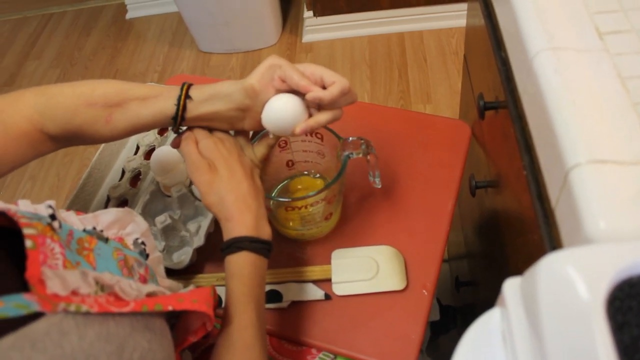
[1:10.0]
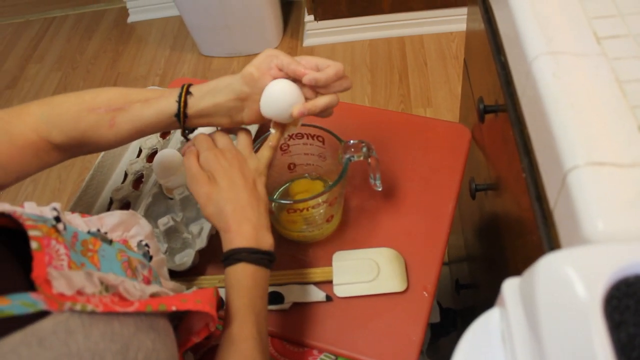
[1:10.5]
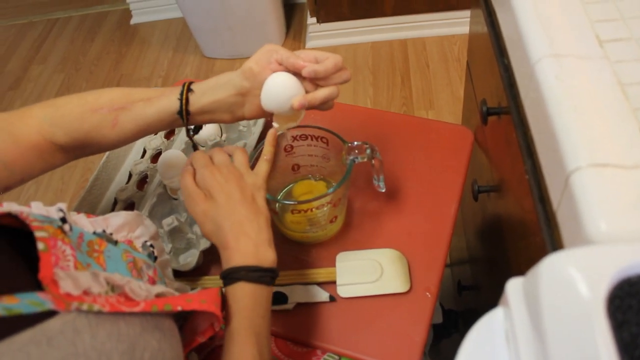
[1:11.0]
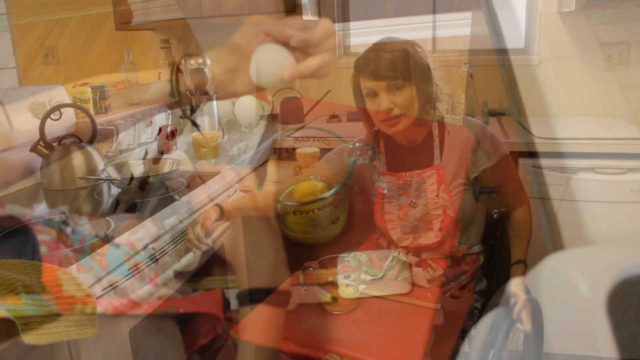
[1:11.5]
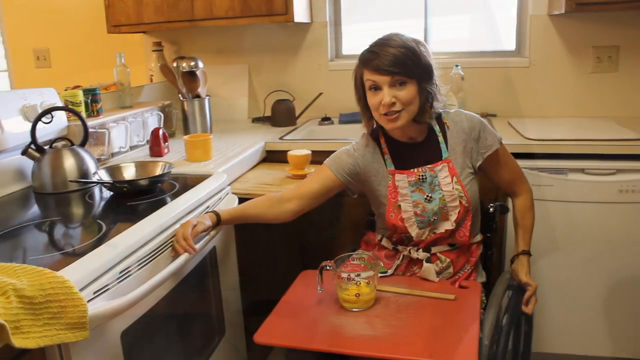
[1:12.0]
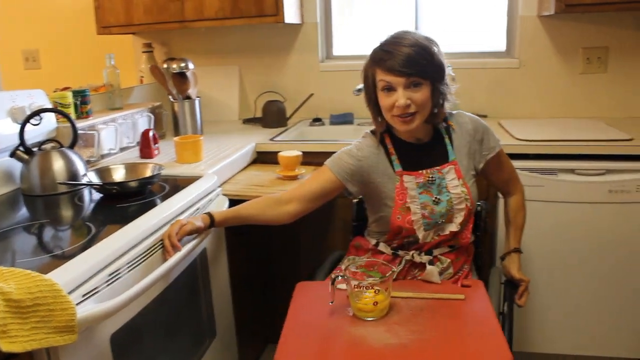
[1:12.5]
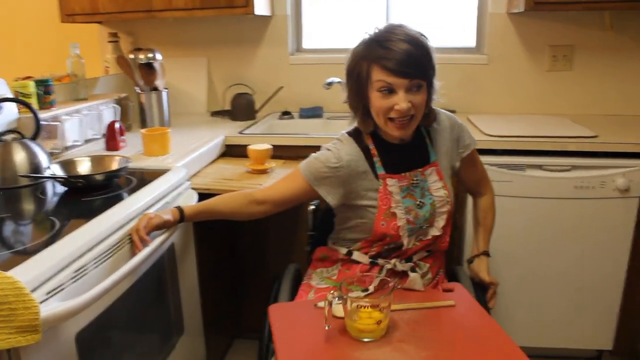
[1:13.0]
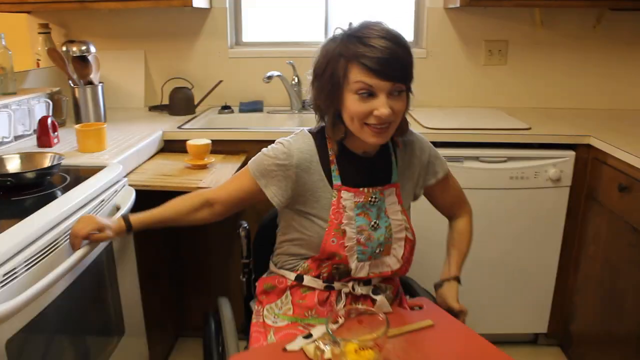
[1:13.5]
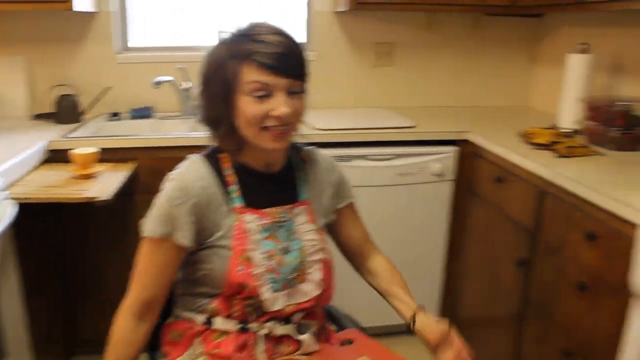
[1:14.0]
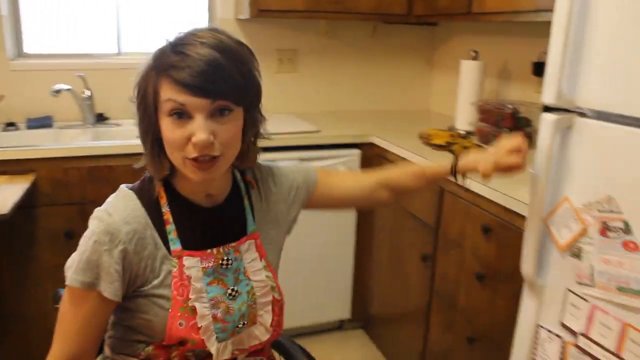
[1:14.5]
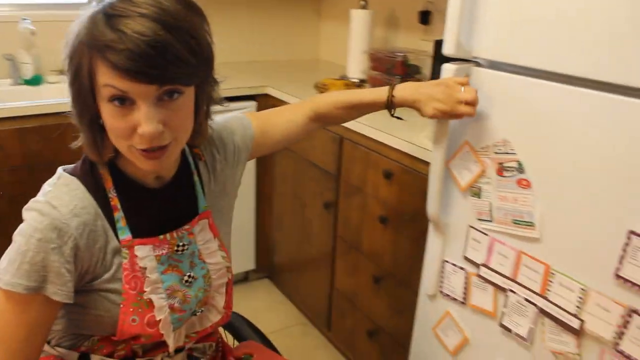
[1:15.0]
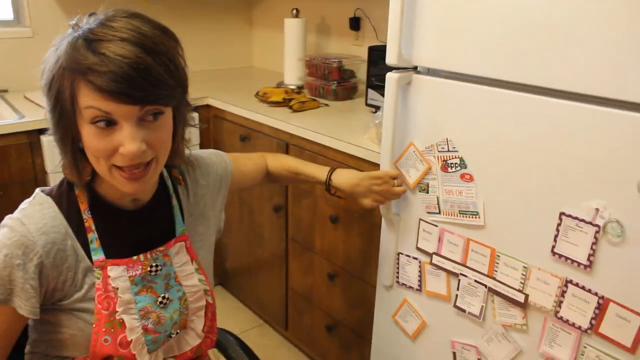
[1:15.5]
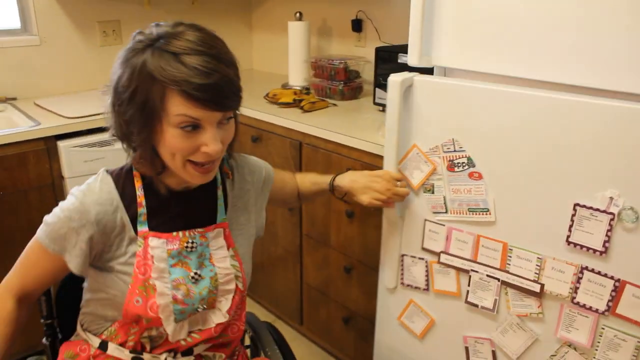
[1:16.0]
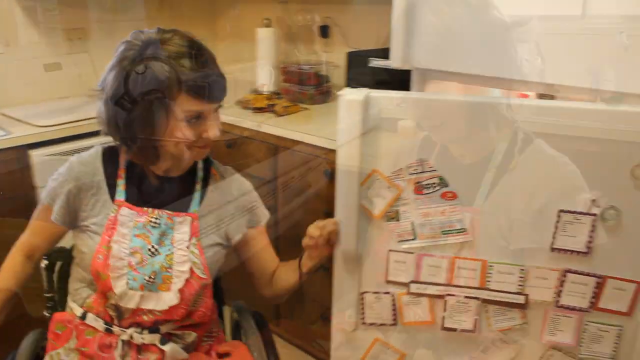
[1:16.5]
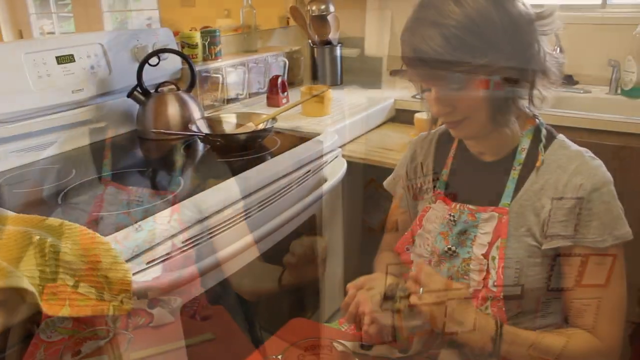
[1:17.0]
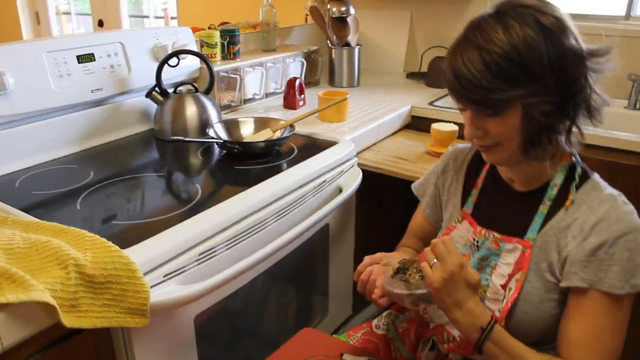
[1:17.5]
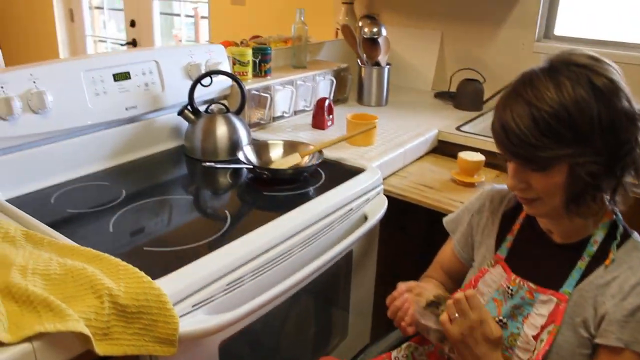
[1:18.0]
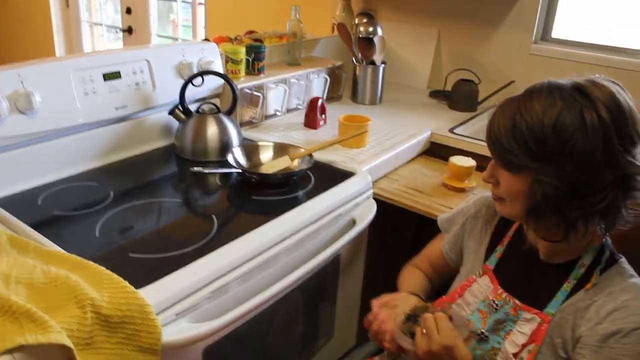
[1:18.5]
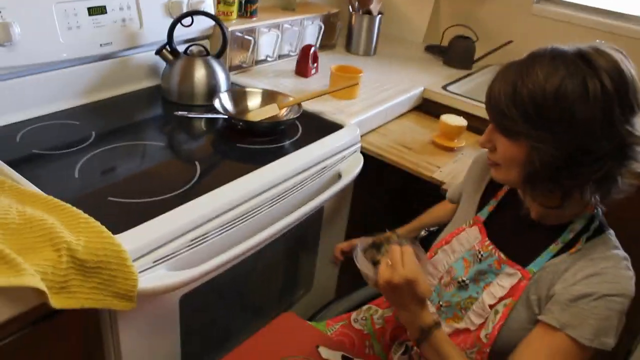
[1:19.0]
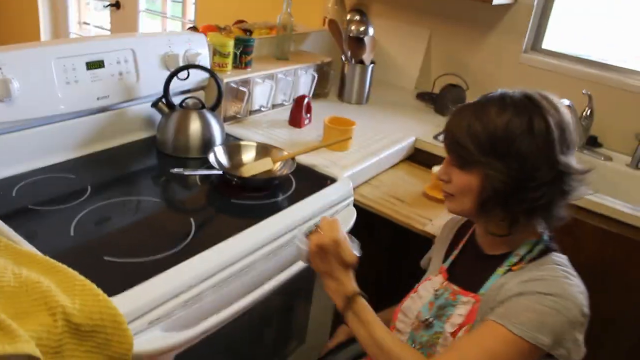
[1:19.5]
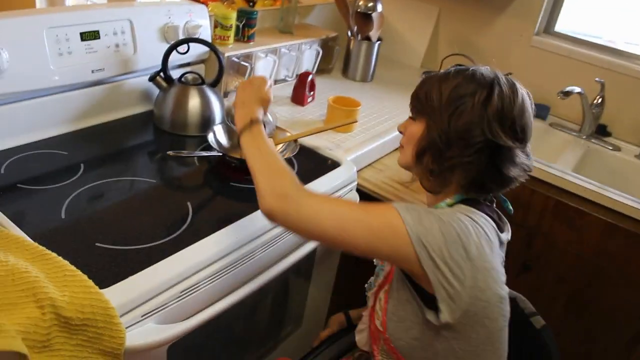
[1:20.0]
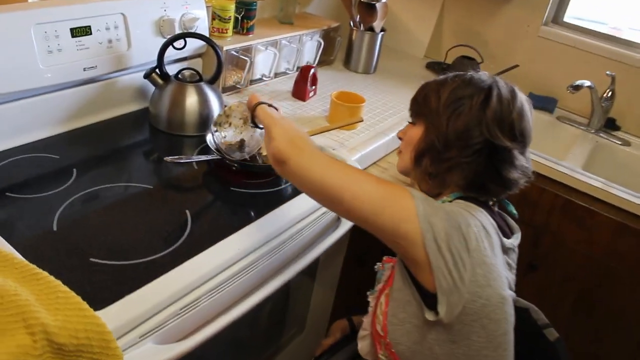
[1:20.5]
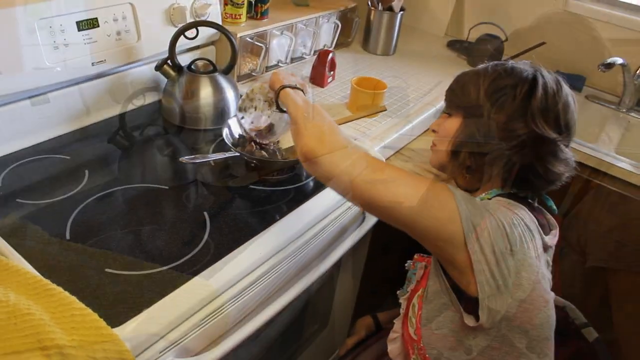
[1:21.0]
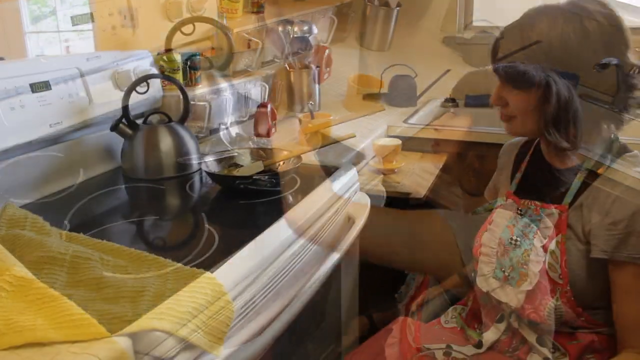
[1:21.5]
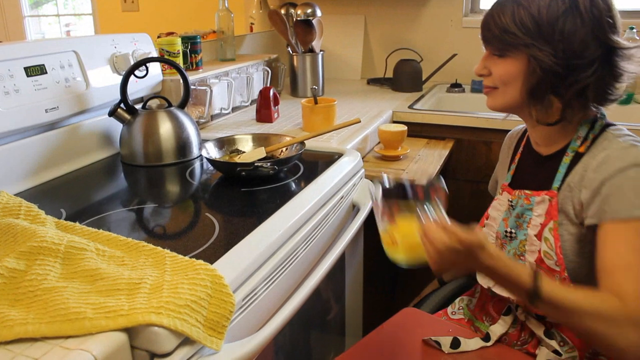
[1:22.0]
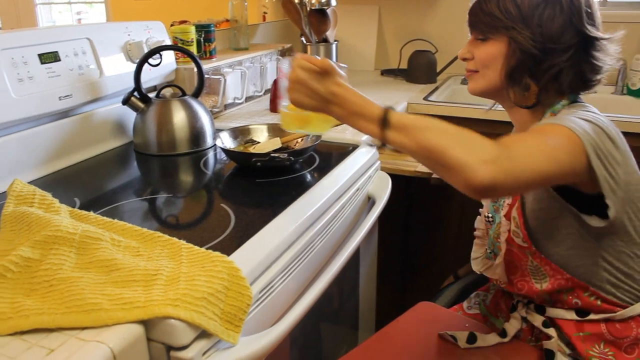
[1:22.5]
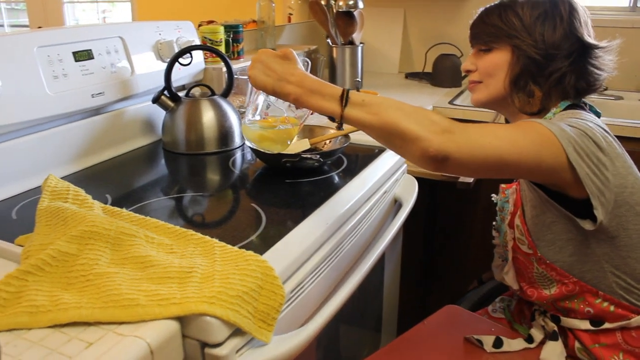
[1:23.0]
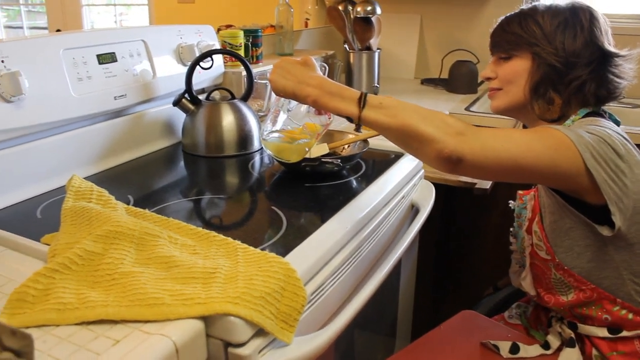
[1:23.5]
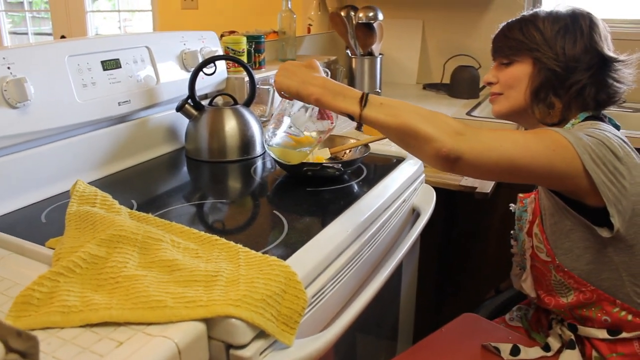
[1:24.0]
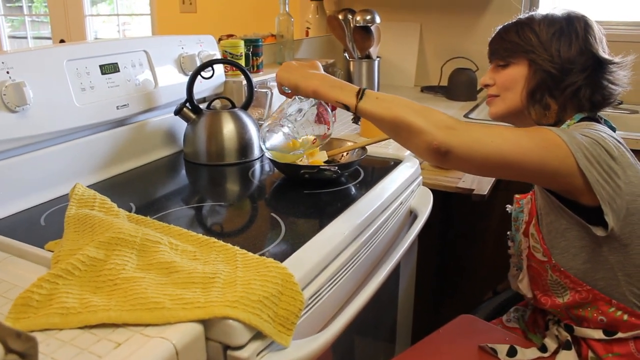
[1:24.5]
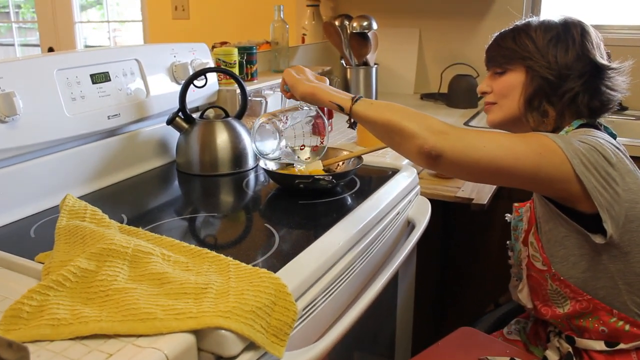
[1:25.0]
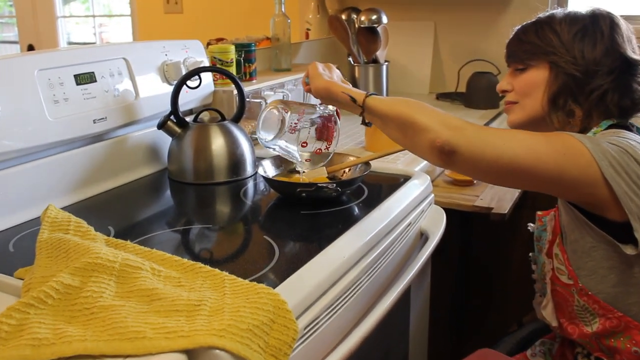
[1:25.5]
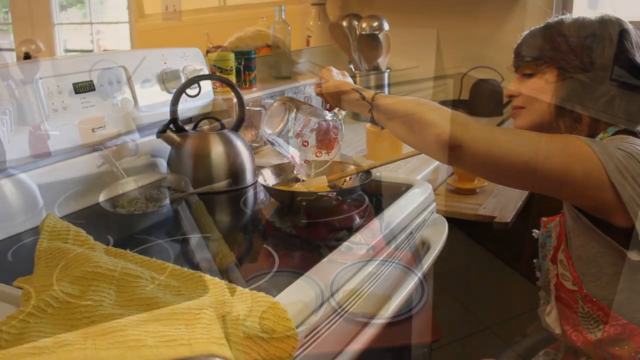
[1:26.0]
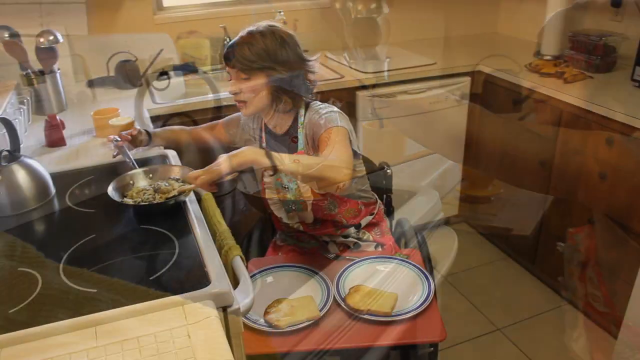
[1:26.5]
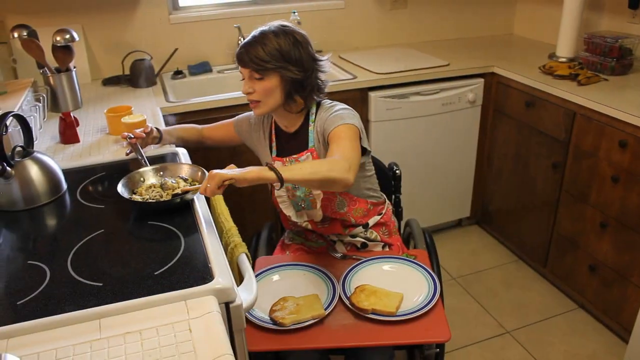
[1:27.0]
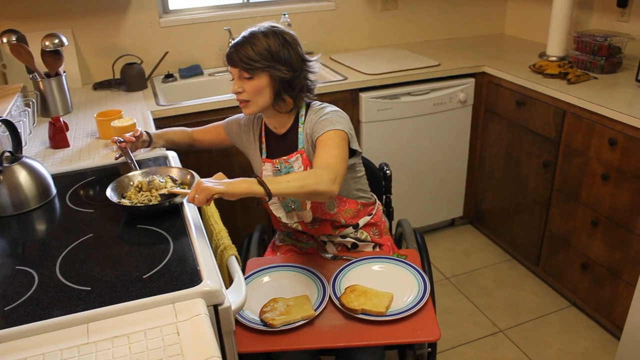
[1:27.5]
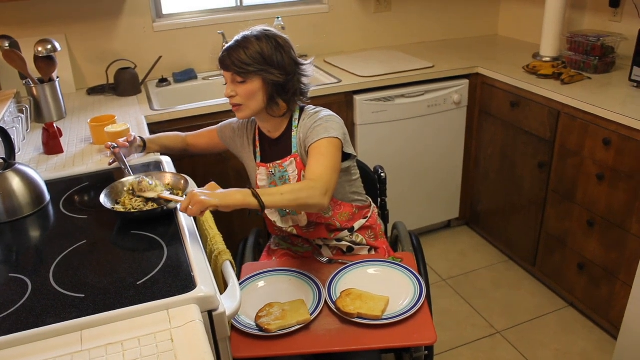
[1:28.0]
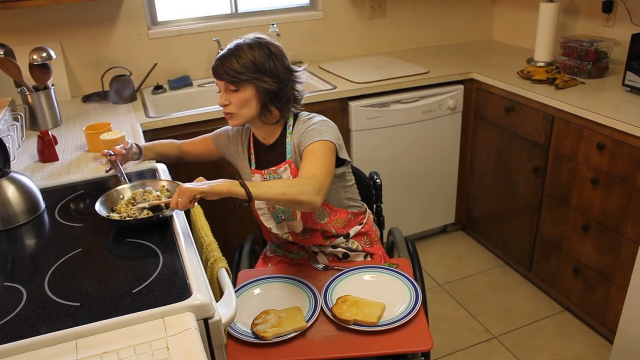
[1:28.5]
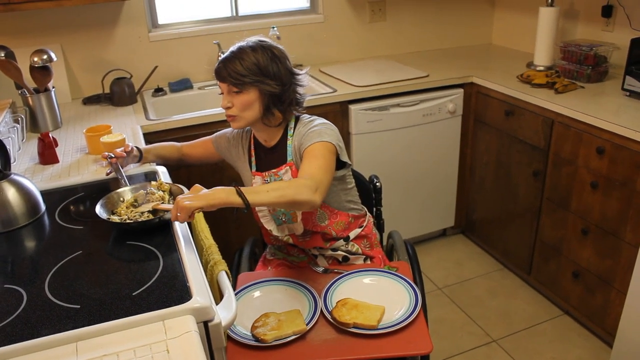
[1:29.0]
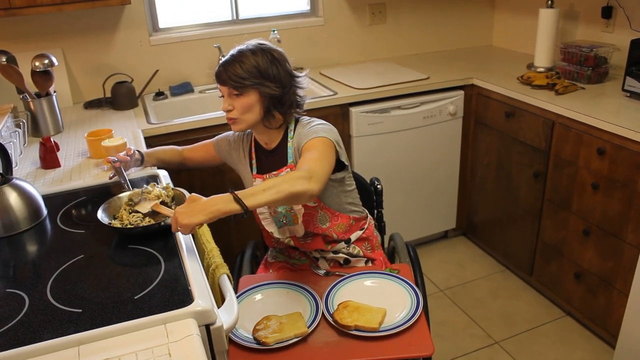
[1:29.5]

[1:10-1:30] From the same angle, the woman puts her pinky into another egg to crack it further and get the yolk and whites out. The video transitions to her in a different corner of the kitchen near the oven, talking to the camera. She makes her way to the fridge in her wheelchair, still talking to the camera, and opens it; what she takes out is not shown. The video then transitions to her back by the stove, where there is a stainless steel pot and a kettle. She first pours a bowl of something into the pot that looks like it could be seasoning, garlic or garnishes. After another transition, she adds the measuring cup of eggs to the pot and starts scrambling the eggs with her spatula.